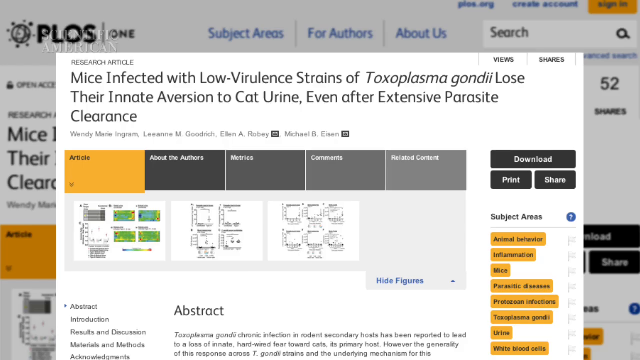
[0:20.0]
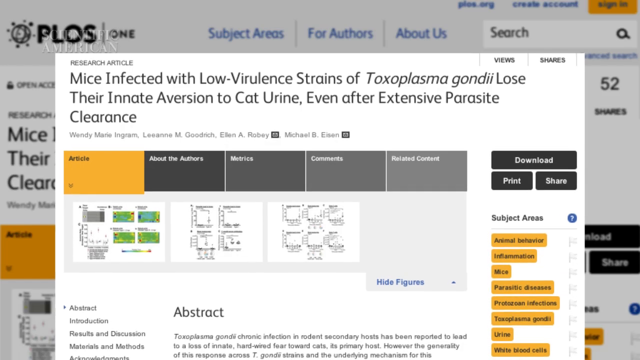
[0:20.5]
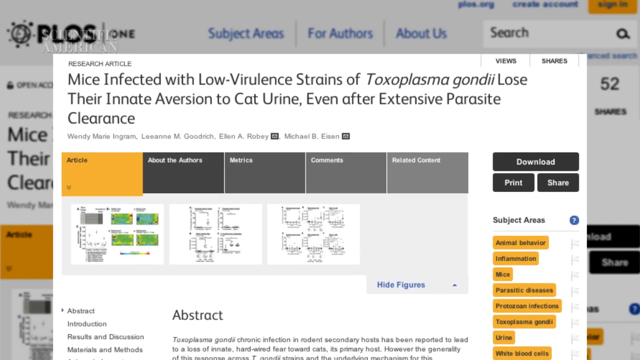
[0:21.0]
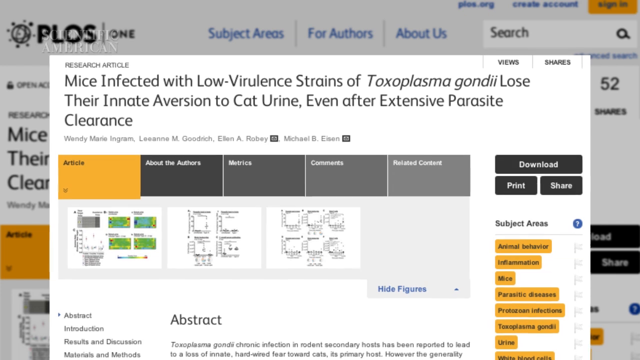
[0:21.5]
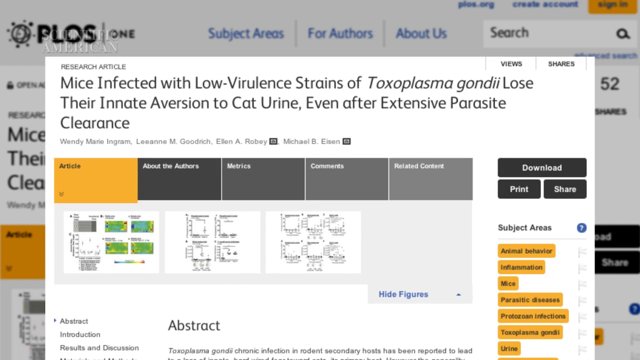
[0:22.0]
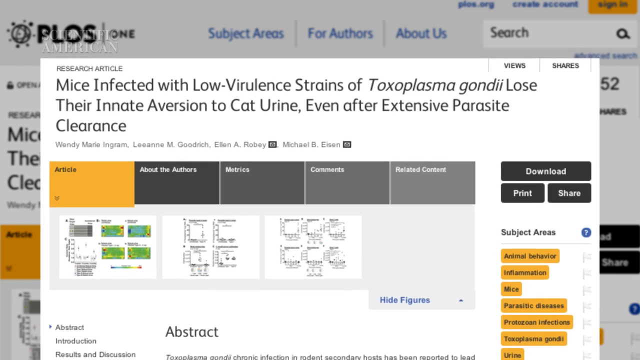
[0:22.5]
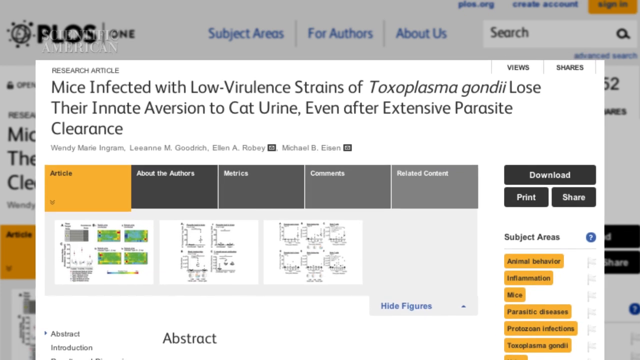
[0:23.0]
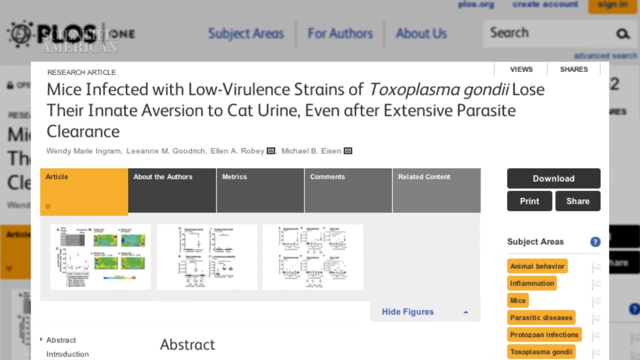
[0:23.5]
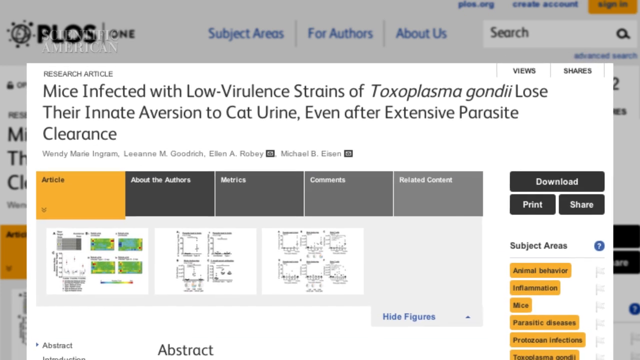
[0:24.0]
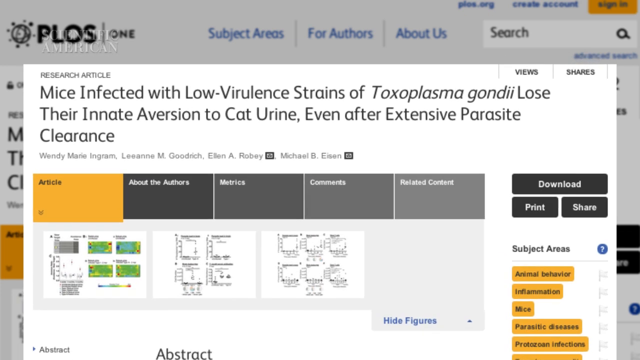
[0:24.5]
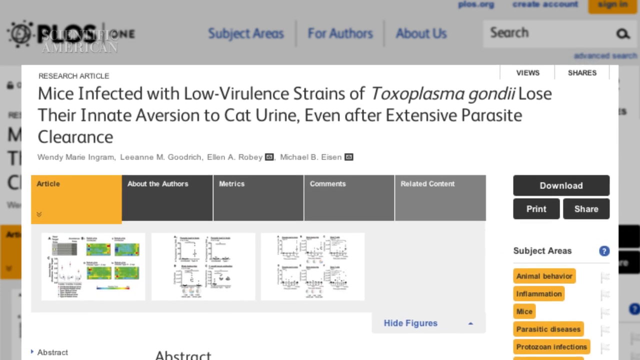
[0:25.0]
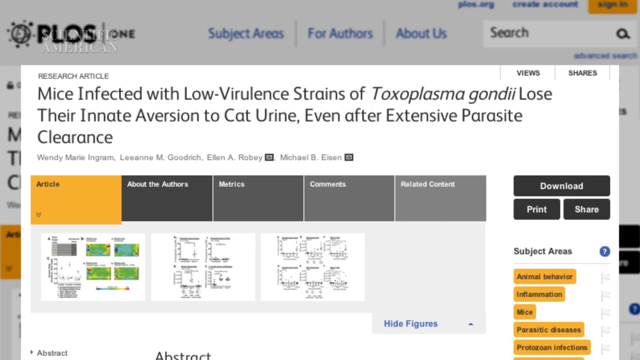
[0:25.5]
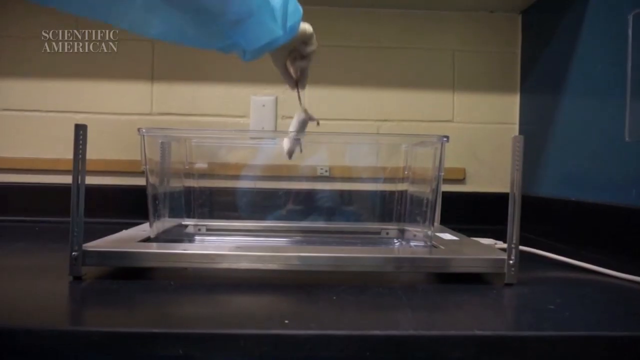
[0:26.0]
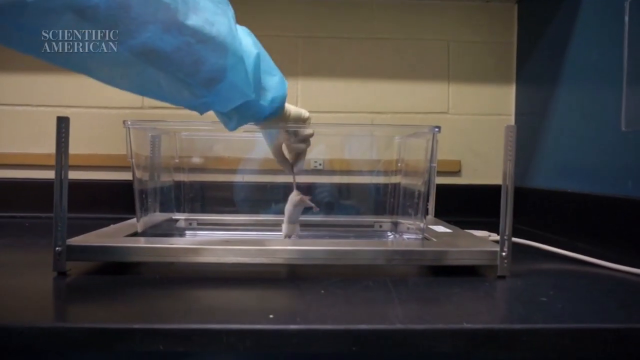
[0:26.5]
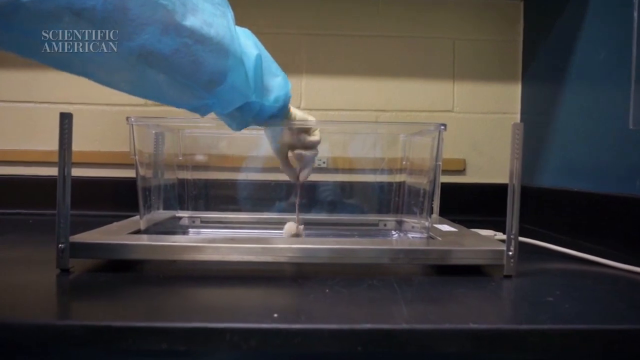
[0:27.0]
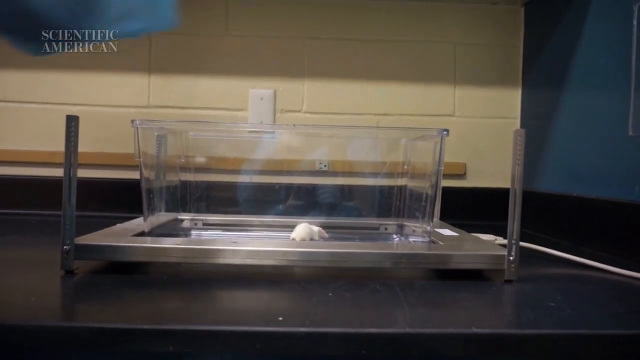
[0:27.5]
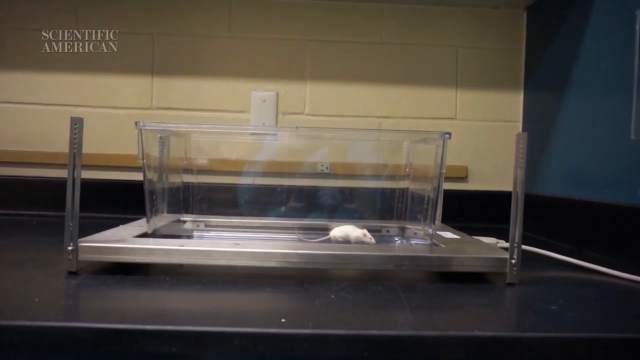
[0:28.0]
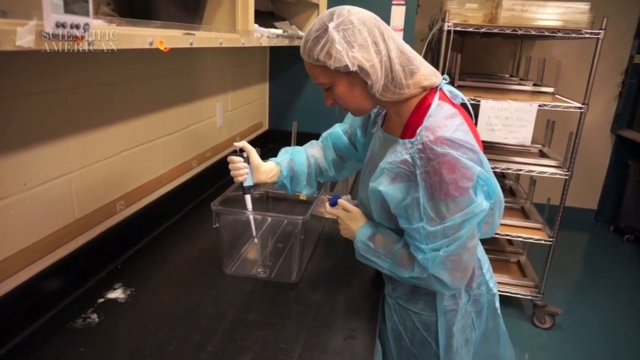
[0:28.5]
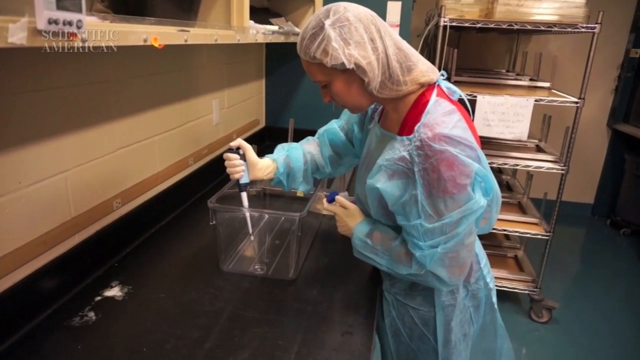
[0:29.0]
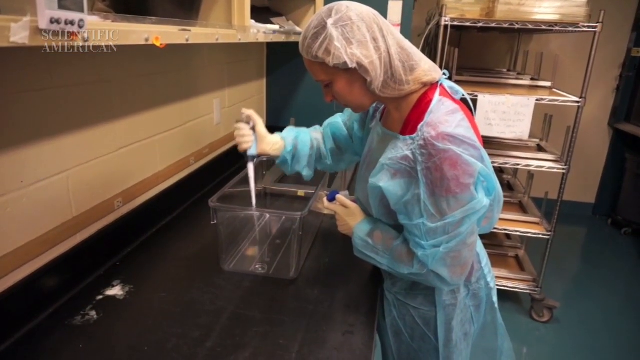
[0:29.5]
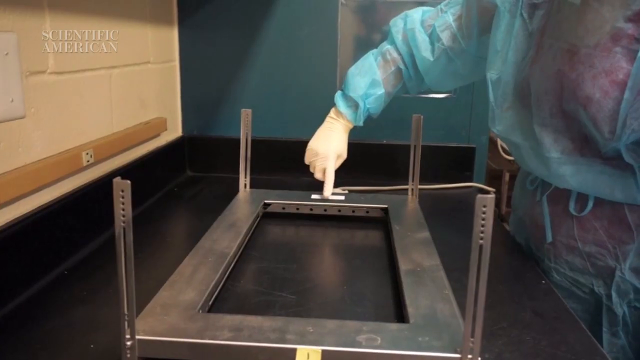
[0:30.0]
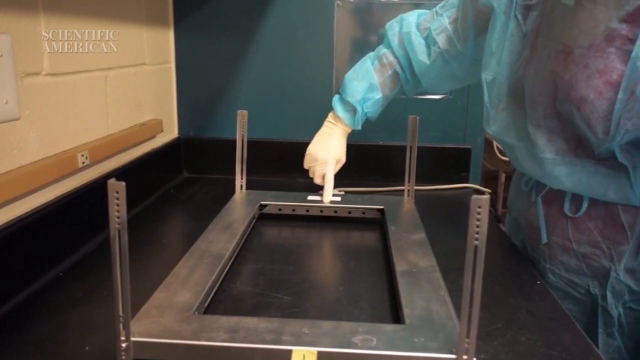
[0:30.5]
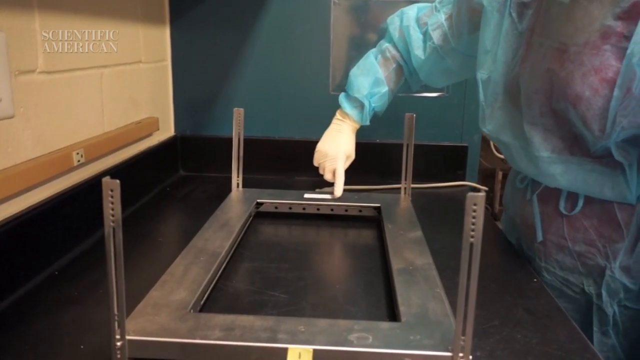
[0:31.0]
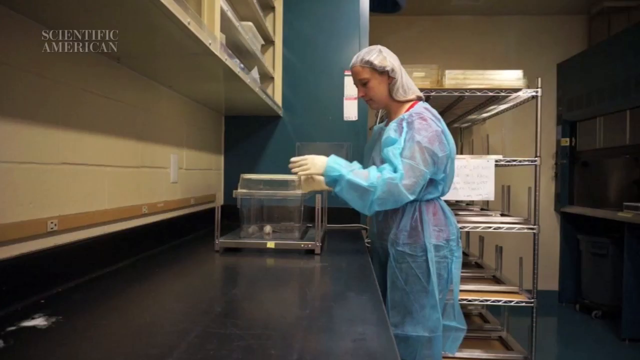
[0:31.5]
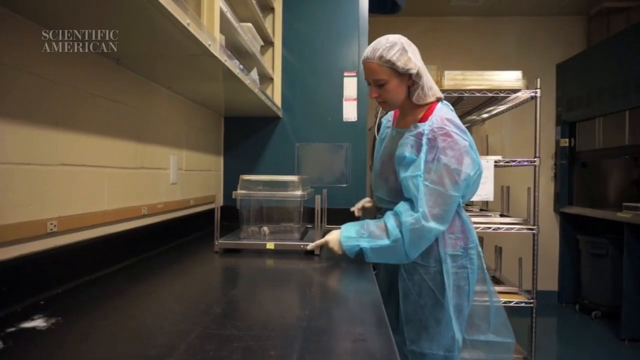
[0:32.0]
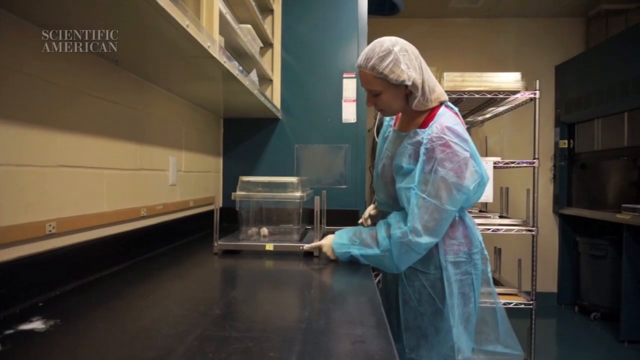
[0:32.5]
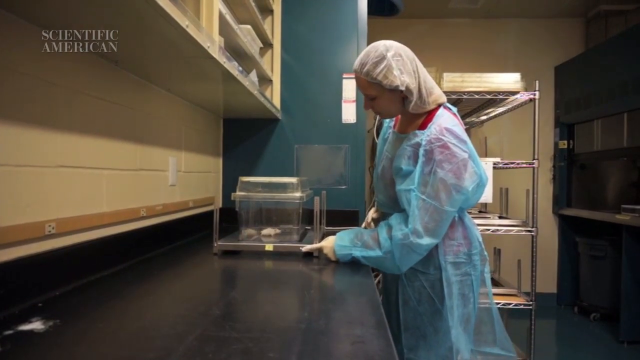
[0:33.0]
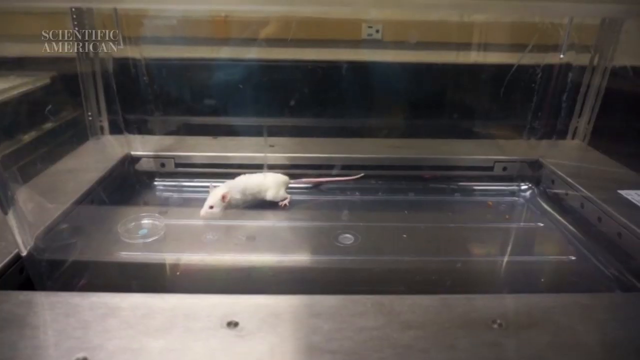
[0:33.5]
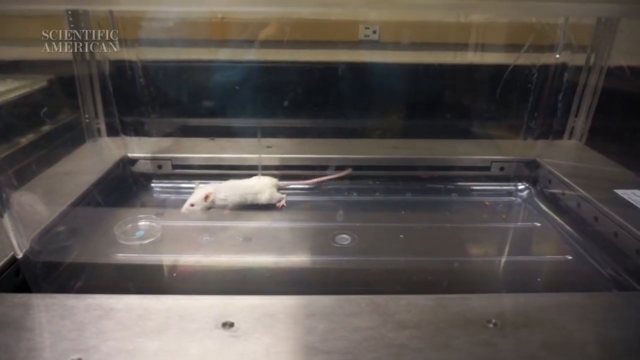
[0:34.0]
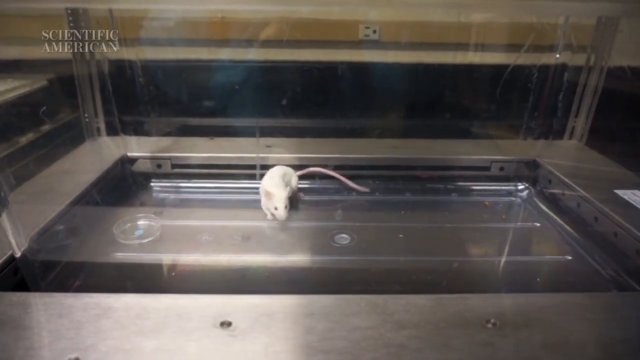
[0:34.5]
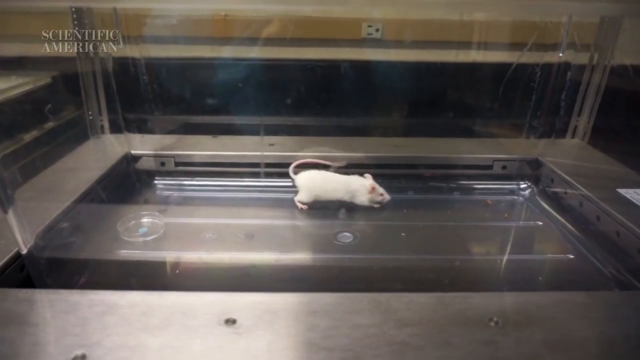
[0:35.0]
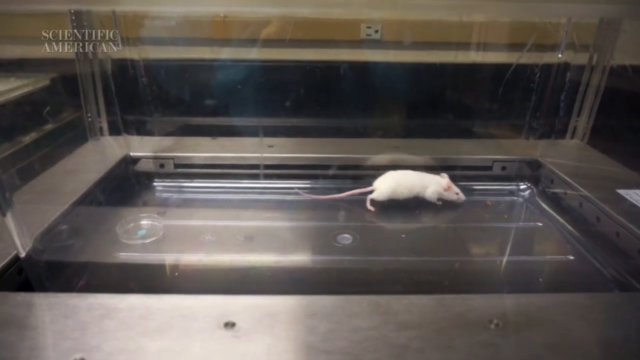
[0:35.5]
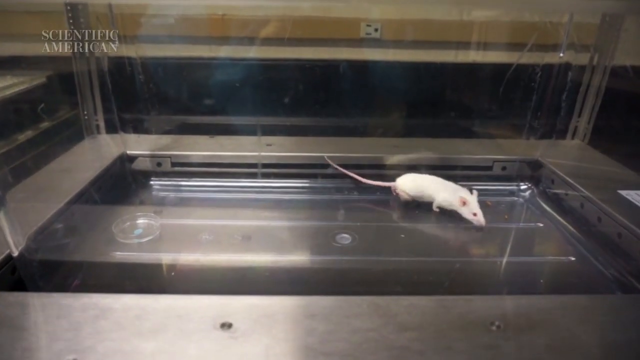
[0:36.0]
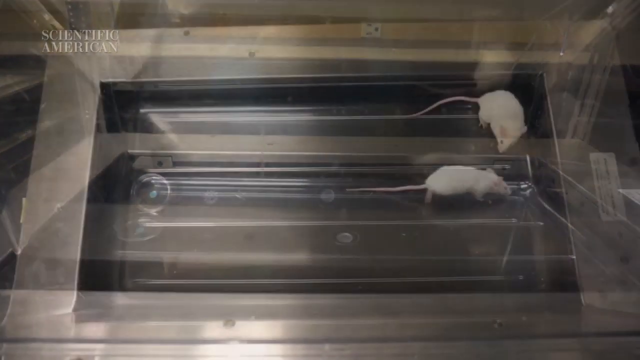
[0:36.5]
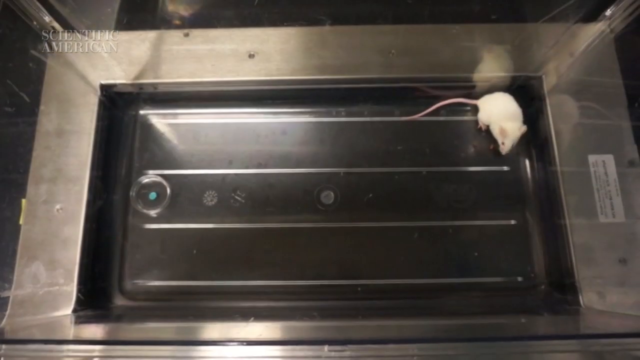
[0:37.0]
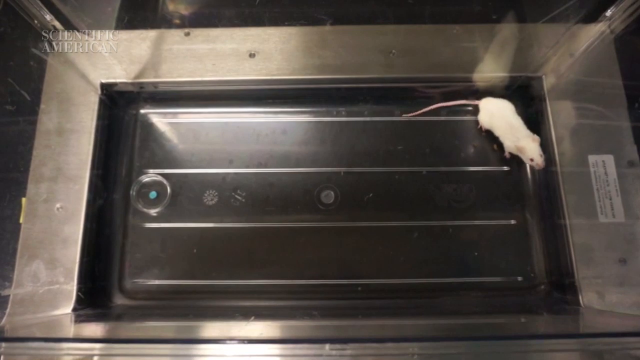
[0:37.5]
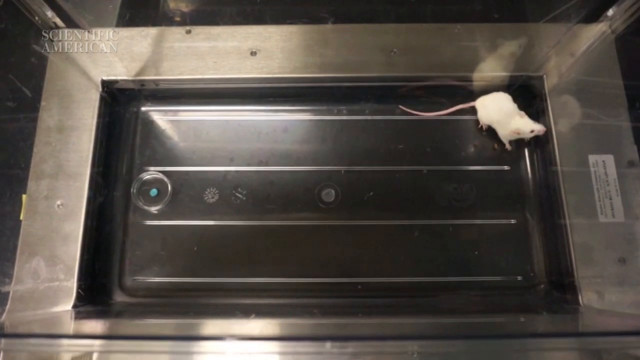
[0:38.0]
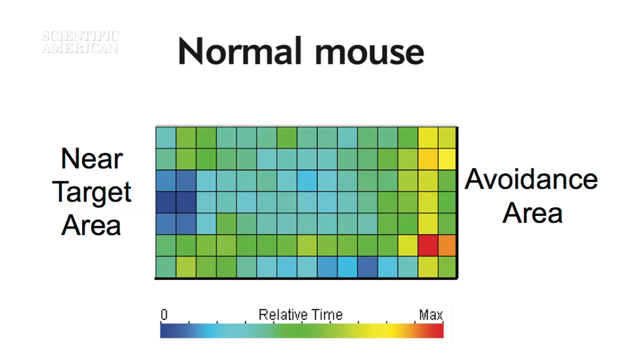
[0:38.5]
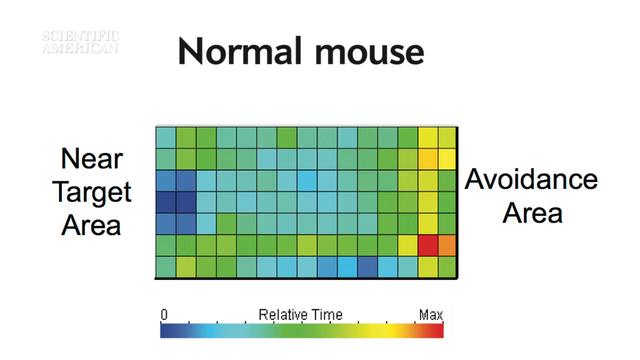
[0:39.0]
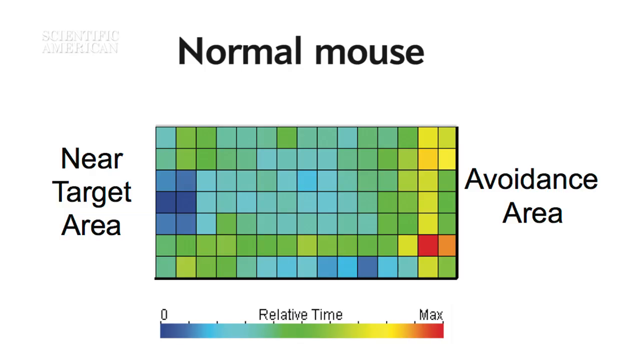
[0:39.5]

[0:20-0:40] Details of a published article appear, referring to how mice infected with low virulence strains of Toxoplasma gondii lose their innate aversion to cat urine even after extensive parasite clearance. The video then shows a mouse being placed inside a glass container and a lady injecting the mouse with some liquid; a lid is placed on the vessel and the mouse is monitored, with footage of it moving inside the container. Next comes a chart that looks a bit like a chessboard, with lots of squares coloured in different shades. The top of the diagram is labelled "normal mouse", the left-hand side "near target area" and the right-hand side "avoidance area".